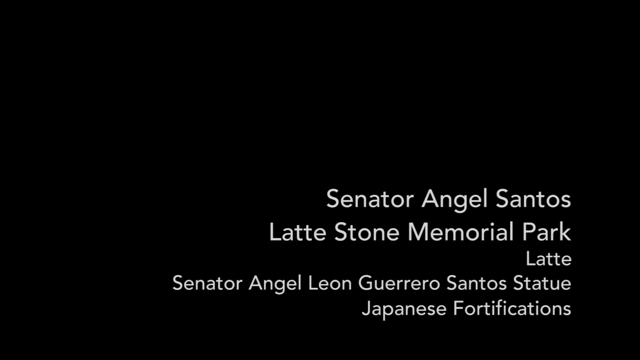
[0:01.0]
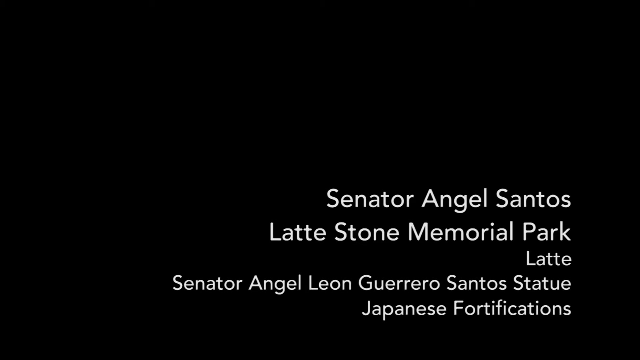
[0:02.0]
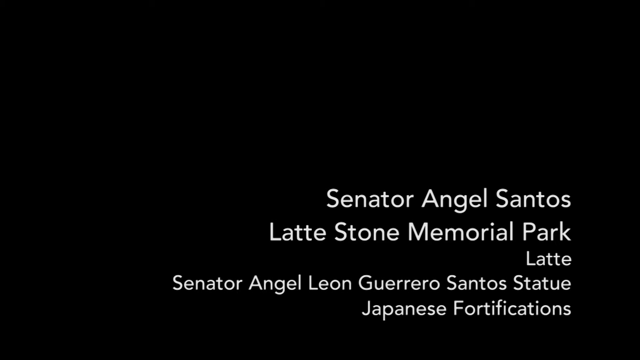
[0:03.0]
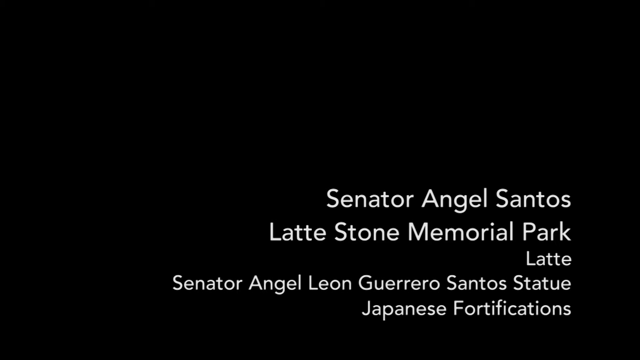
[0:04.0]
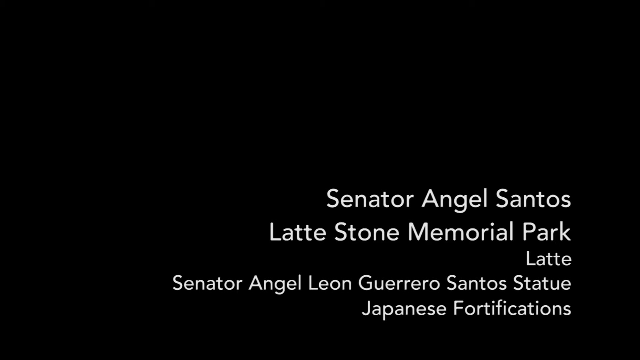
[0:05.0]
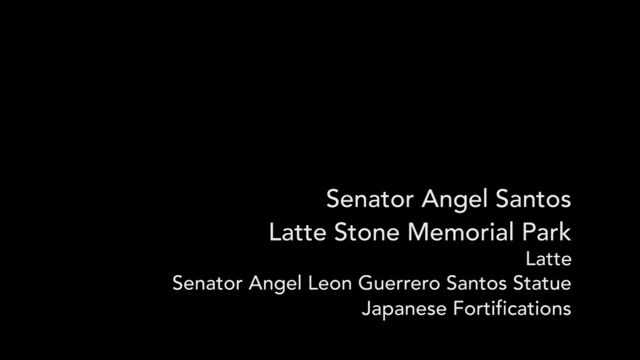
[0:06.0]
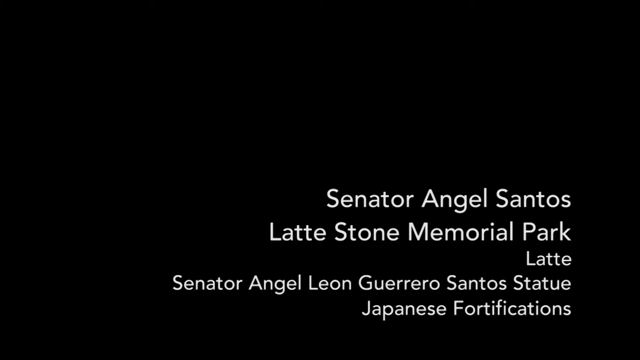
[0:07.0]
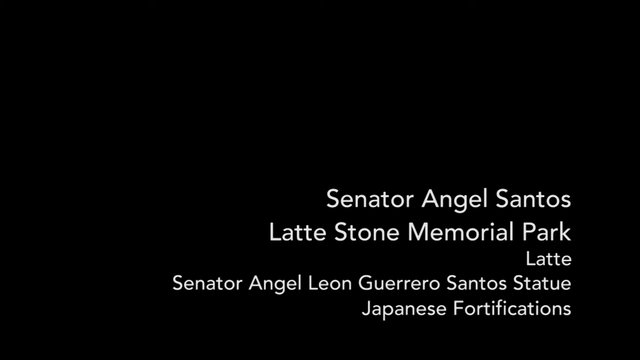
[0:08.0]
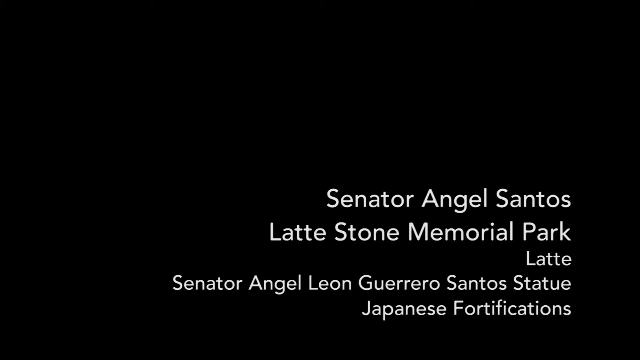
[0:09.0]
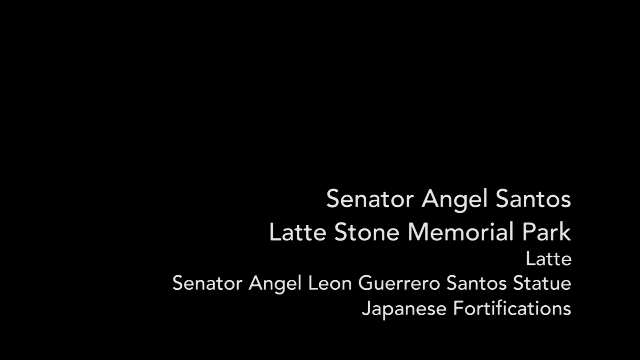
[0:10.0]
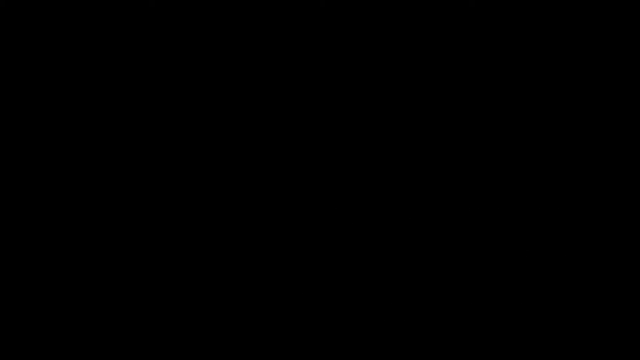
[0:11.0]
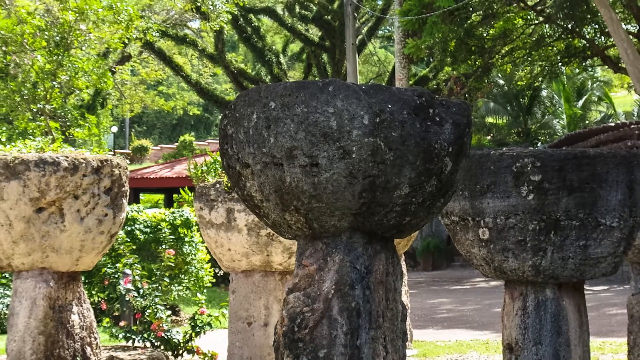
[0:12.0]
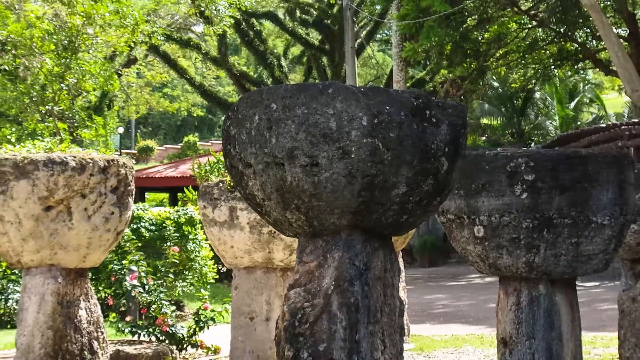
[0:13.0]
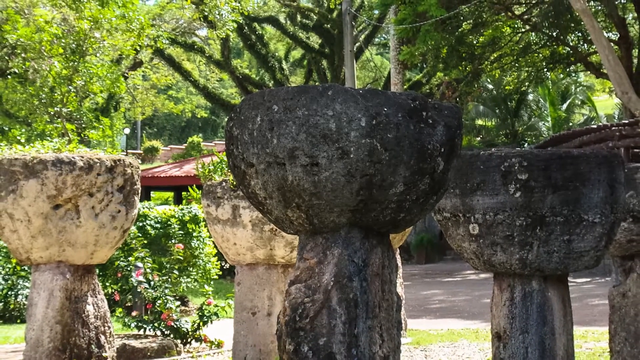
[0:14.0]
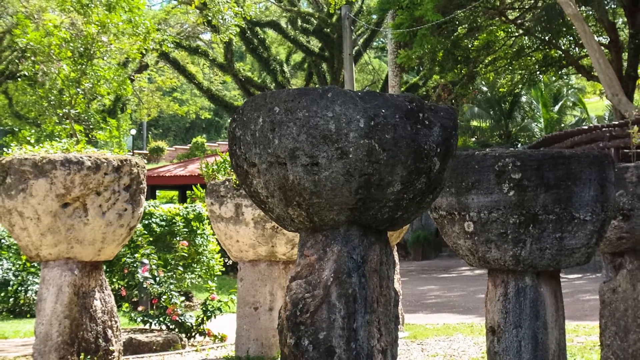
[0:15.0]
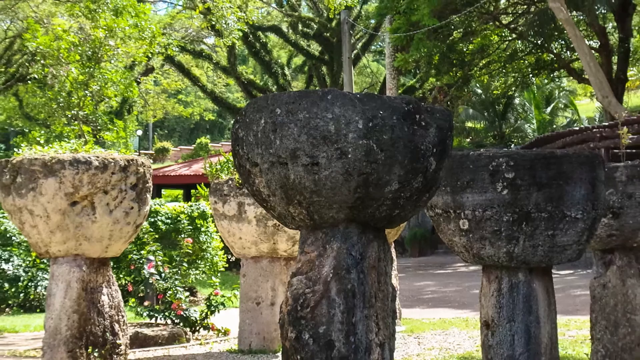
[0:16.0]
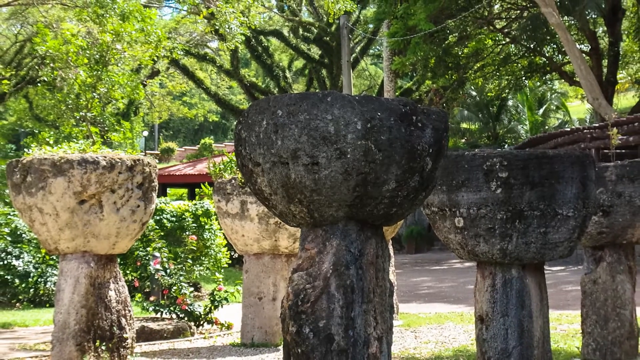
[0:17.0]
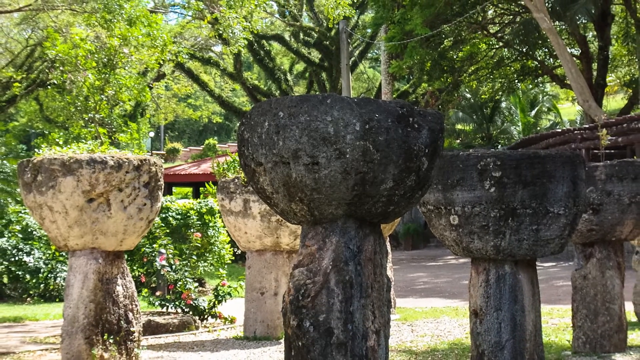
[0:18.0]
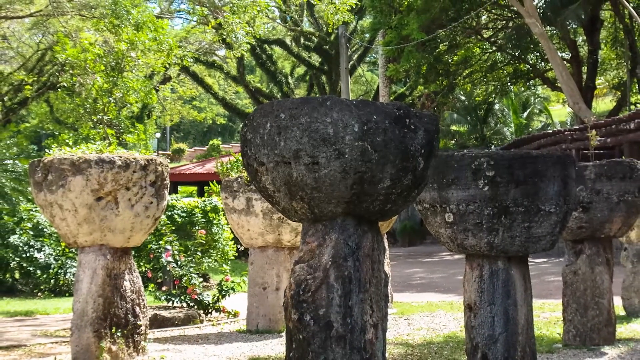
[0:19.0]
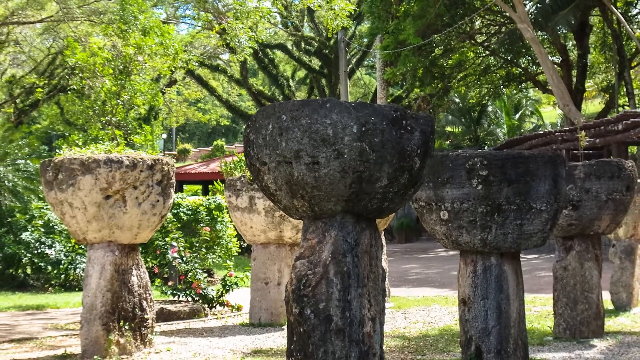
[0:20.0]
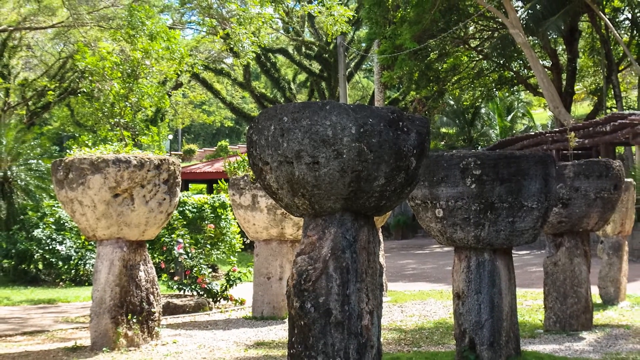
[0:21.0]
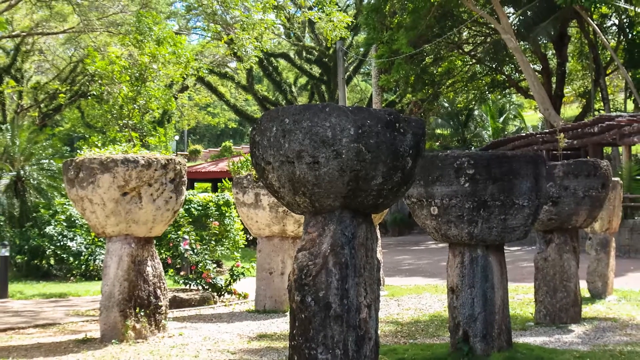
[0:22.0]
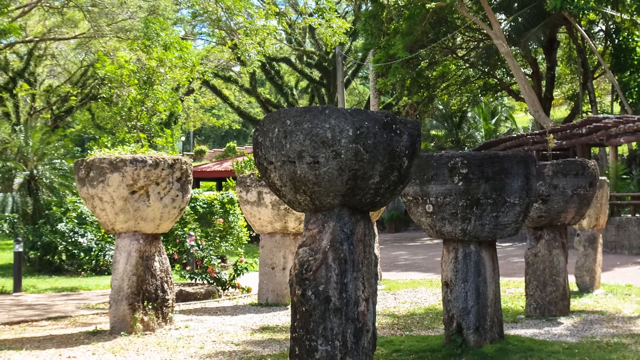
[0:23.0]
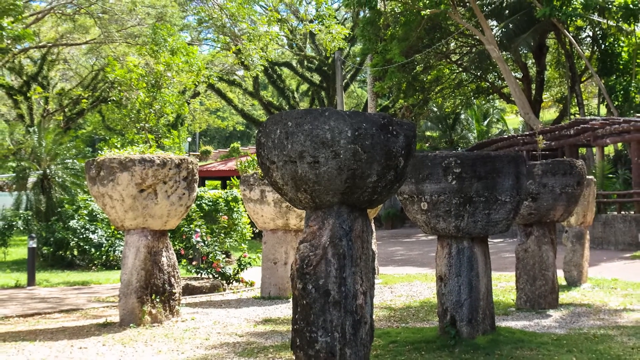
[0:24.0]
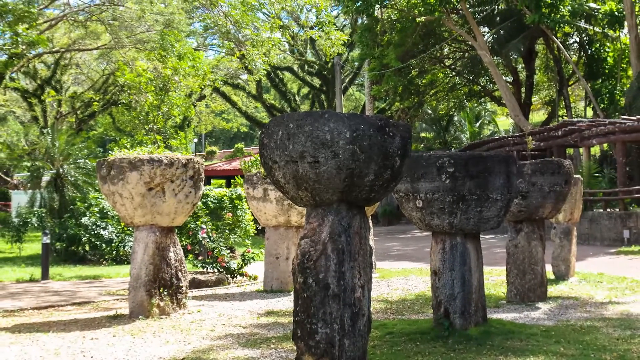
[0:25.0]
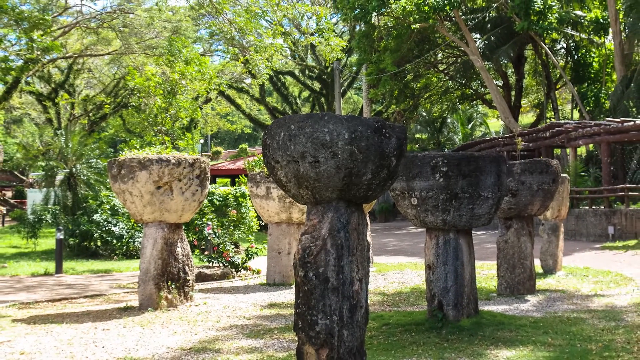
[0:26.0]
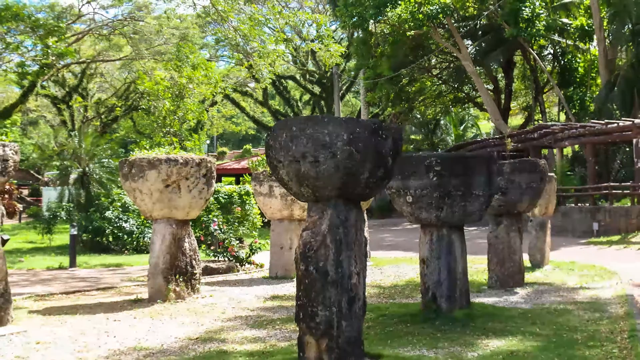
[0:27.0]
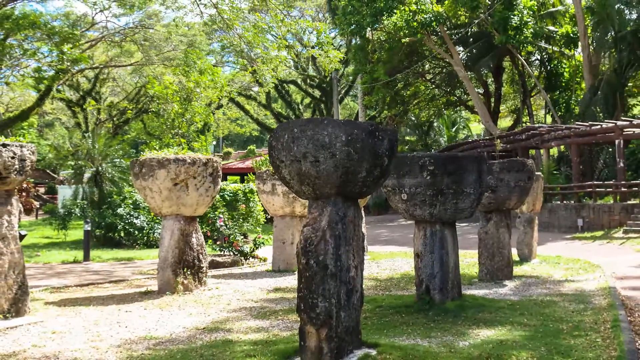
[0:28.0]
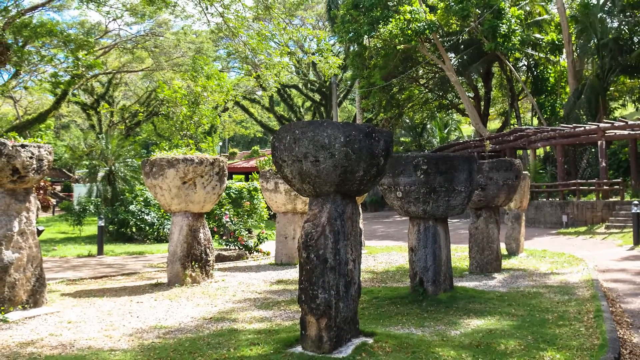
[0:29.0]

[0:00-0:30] The video opens on a black screen with white text in the lower right-hand corner that reads "Senator Angel Santos, Latte Stone Memorial Park, Latte, Senator Angel Leon Guerrero Santos statue, Japanese fortifications". The text stays on screen for about ten seconds, then fades to a shot of some outdoor Japanese gardens. The camera gradually moves backwards to show more of the scene, but the scene itself is static, with no movement. A pathway runs from the right to the left of the screen, and on either side of it there are five or six very large stone urns shaped like egg cups. Behind the urns is a timber railing or fence, and at the top of the screen are many very bright green trees. Green grass is visible on the left of the screen. As the camera continues to zoom out, a small flight of stone steps appears at the far right of the screen and another stone urn at the far left.